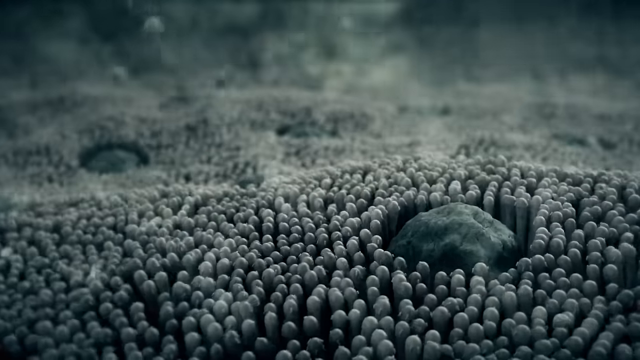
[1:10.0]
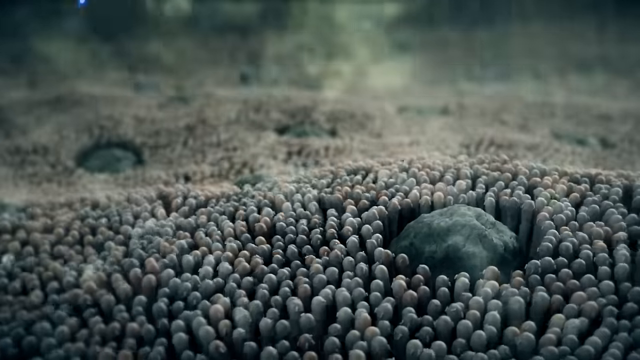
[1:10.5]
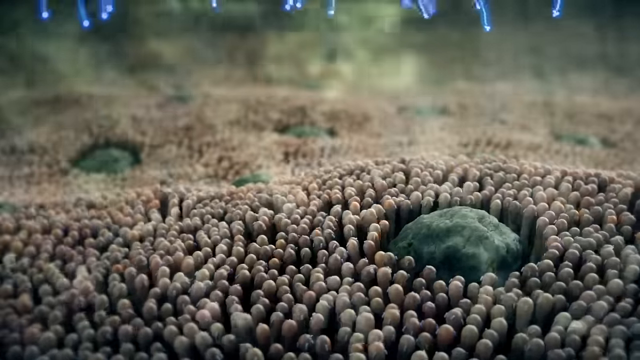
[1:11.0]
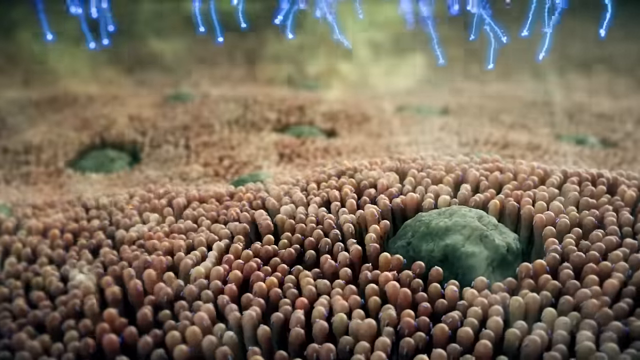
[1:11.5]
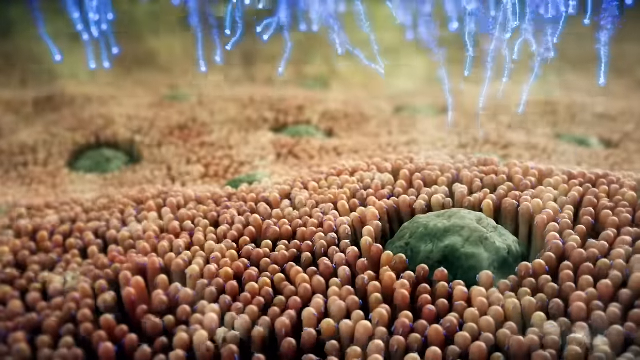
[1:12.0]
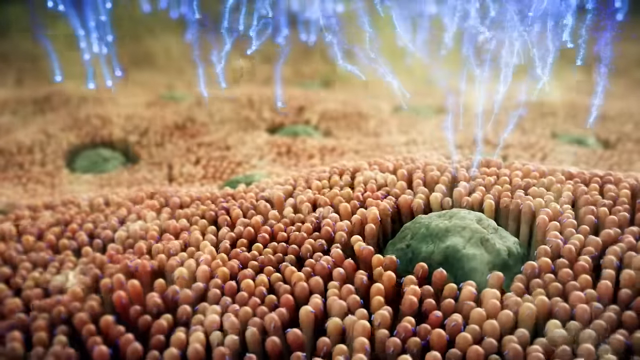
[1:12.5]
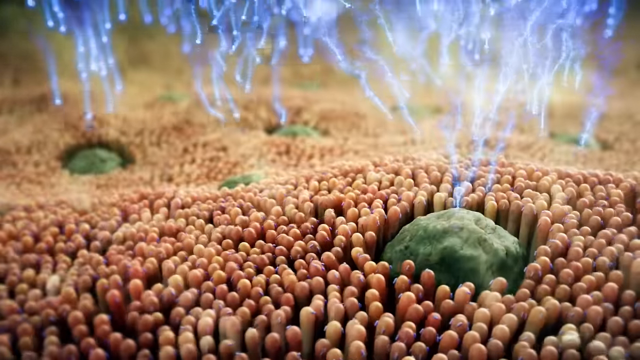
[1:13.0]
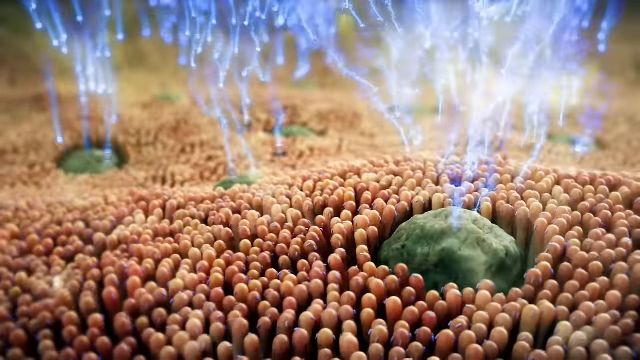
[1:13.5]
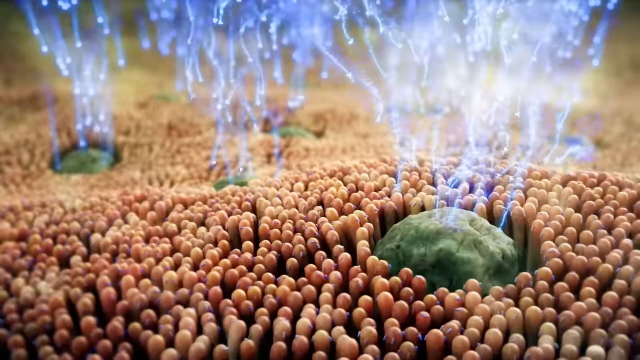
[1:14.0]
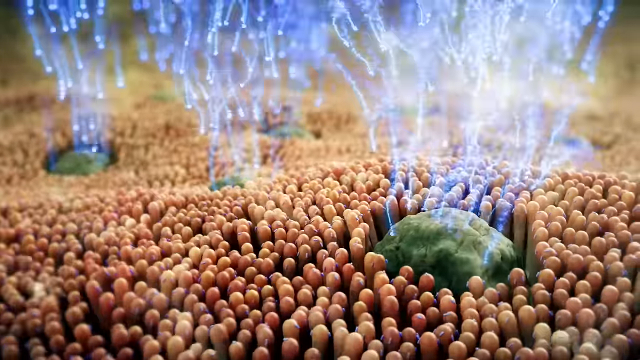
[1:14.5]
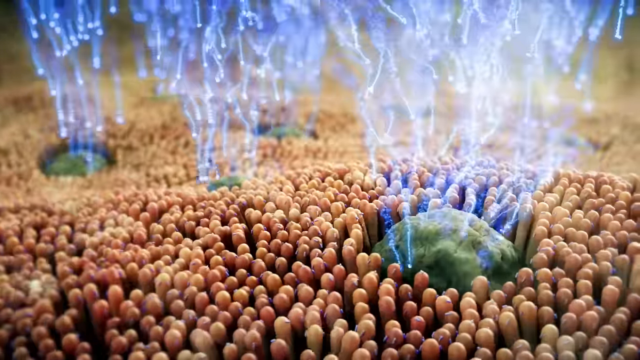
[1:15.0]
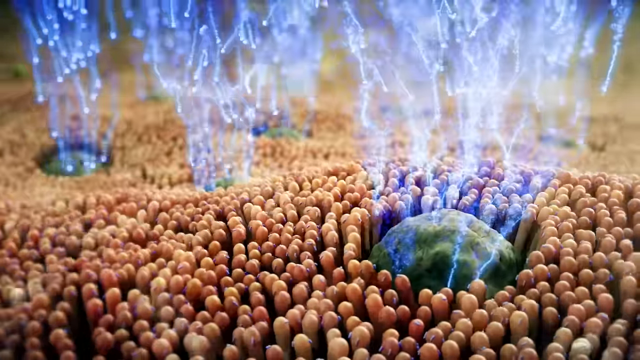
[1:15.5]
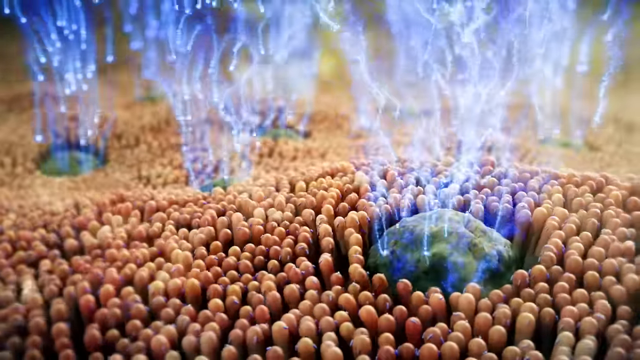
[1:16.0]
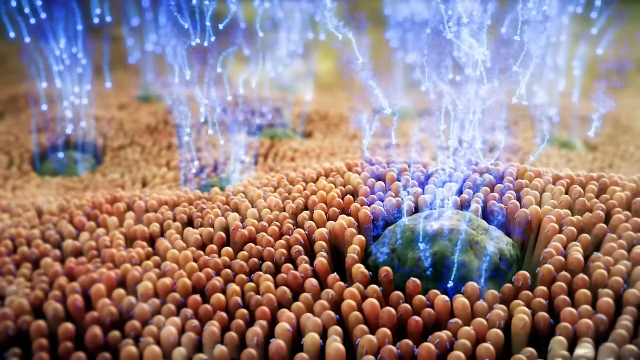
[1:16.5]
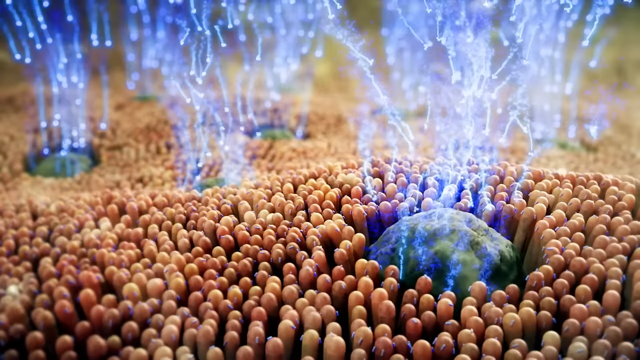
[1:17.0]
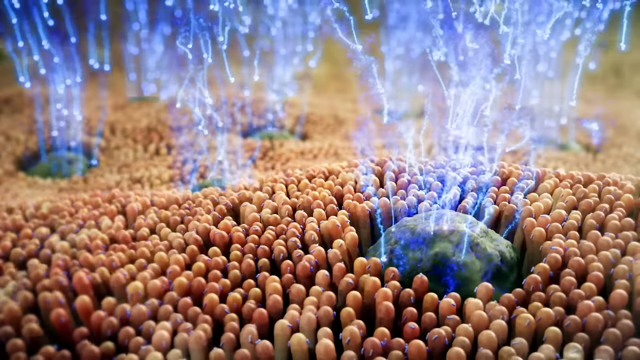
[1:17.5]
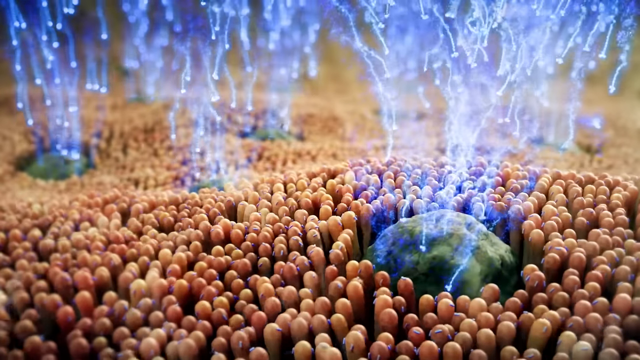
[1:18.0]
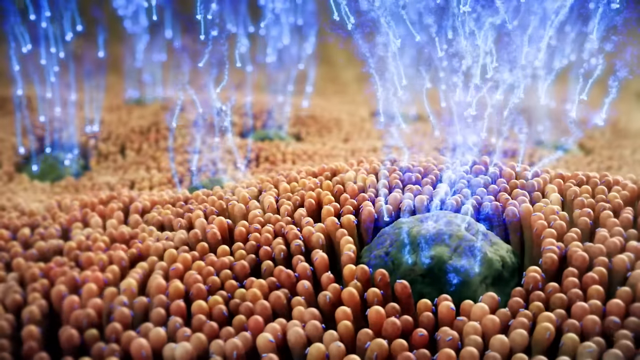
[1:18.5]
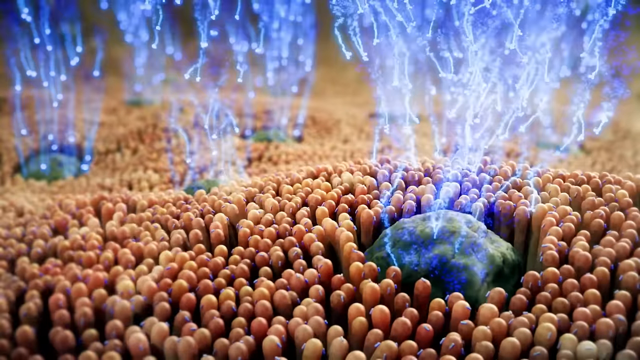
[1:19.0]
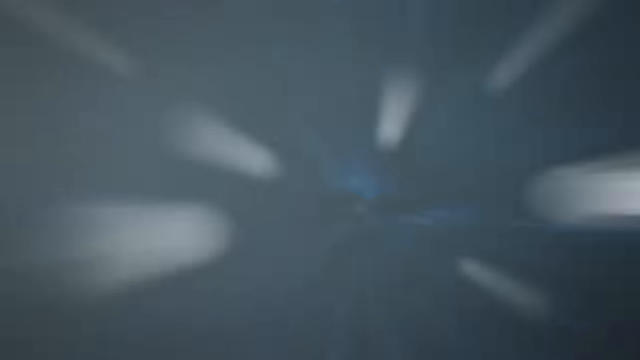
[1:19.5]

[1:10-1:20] The scene begins in grayscale, showing small spongy-looking dots and a couple of rocks in different areas. Blue streams of light come down from the top, and everything lights up in very bright, vivid color. Small brown and tan tendrils come out of the ground, and there is a brownish green color on what appear to be almost rock-like structures surrounded by these tendrils. The blue light and particles pour down onto just the rock portions before the video shifts to a different scene.